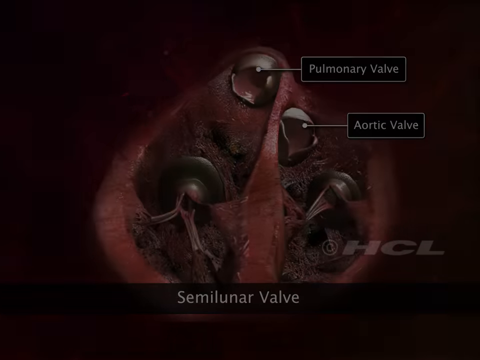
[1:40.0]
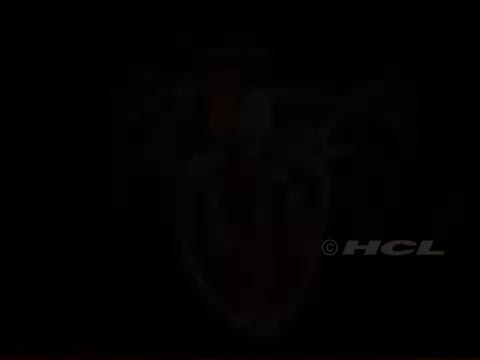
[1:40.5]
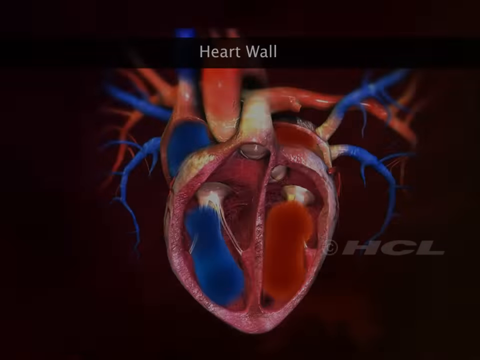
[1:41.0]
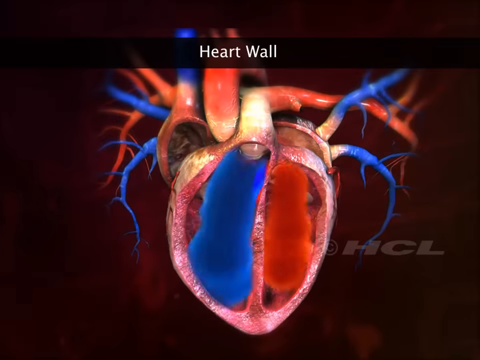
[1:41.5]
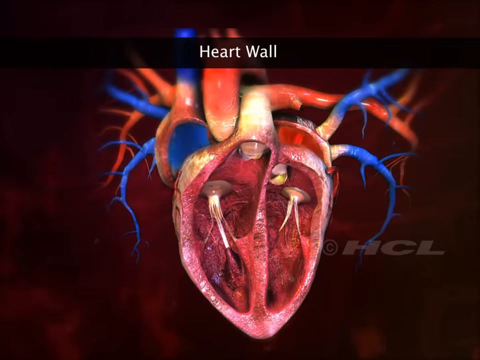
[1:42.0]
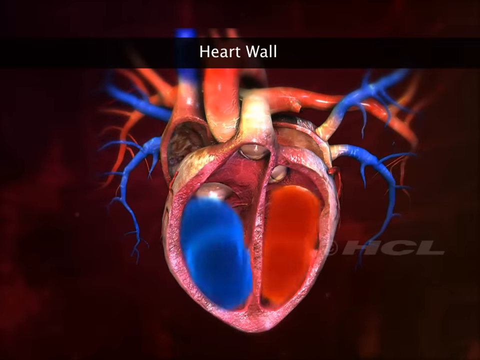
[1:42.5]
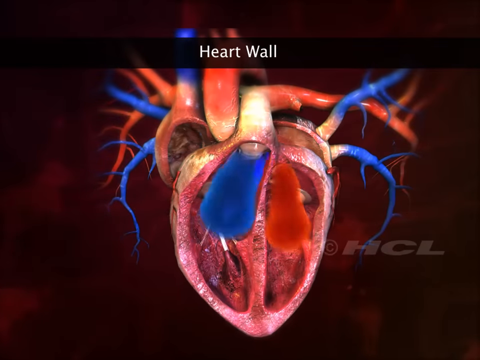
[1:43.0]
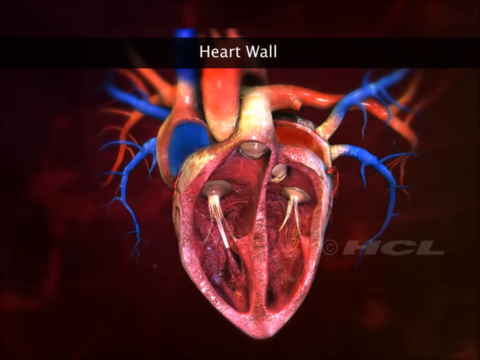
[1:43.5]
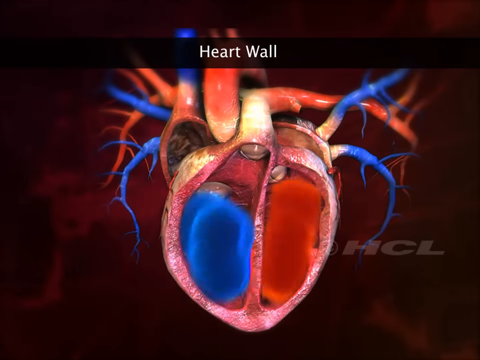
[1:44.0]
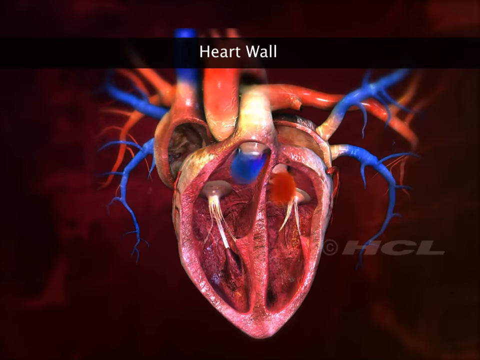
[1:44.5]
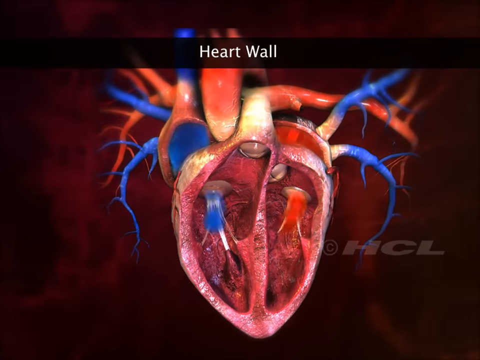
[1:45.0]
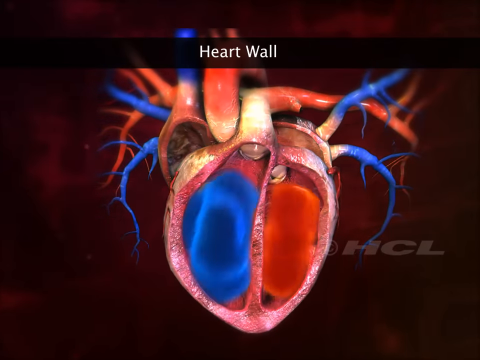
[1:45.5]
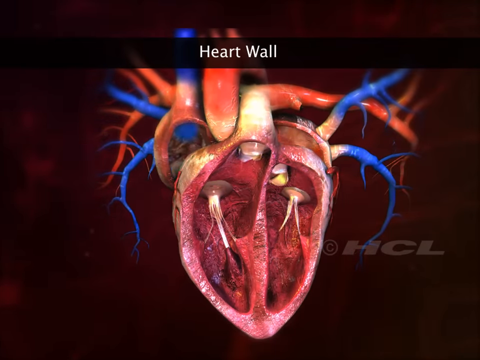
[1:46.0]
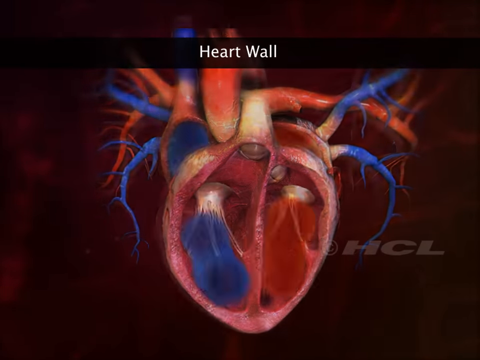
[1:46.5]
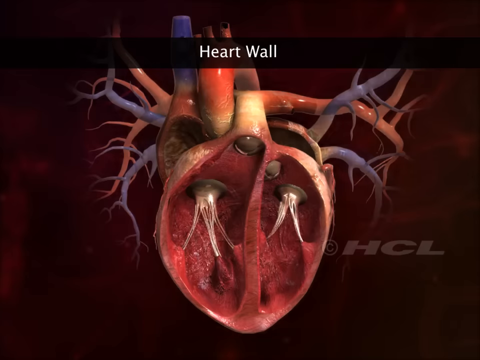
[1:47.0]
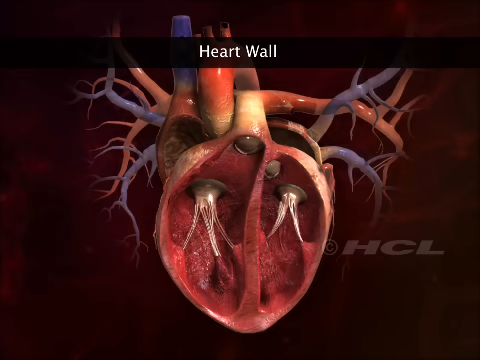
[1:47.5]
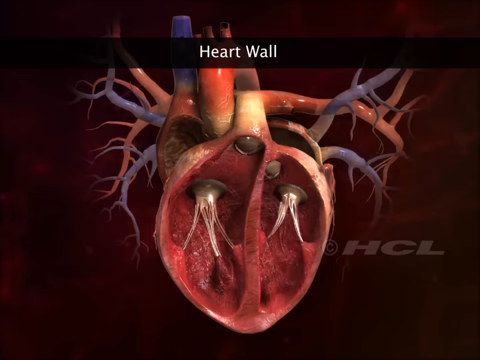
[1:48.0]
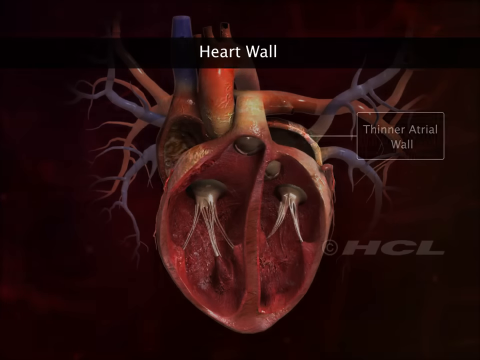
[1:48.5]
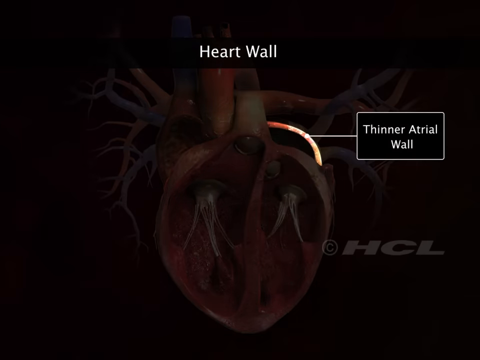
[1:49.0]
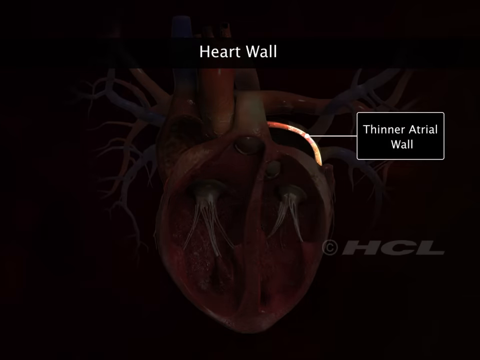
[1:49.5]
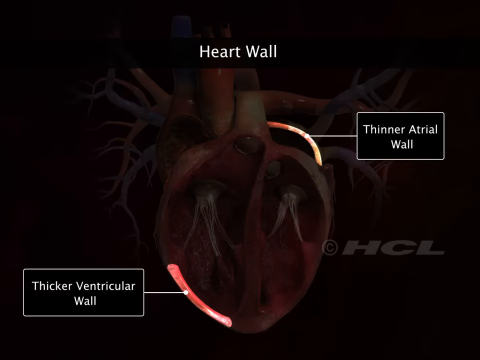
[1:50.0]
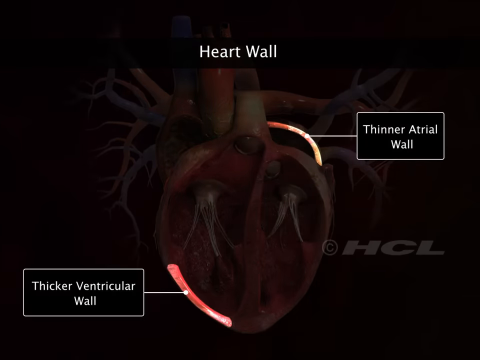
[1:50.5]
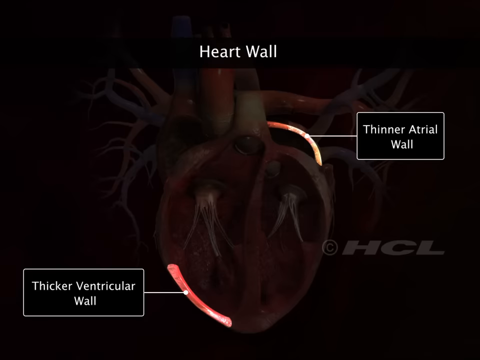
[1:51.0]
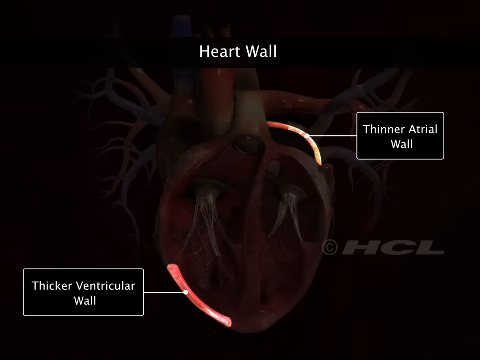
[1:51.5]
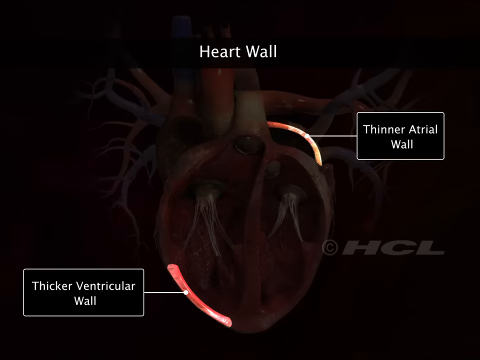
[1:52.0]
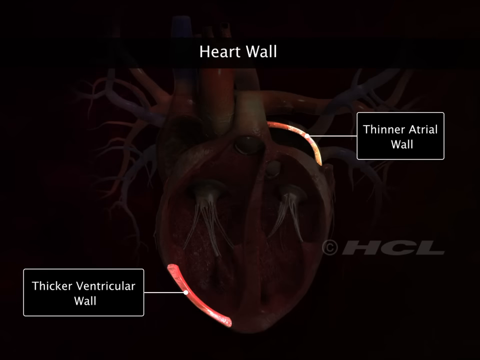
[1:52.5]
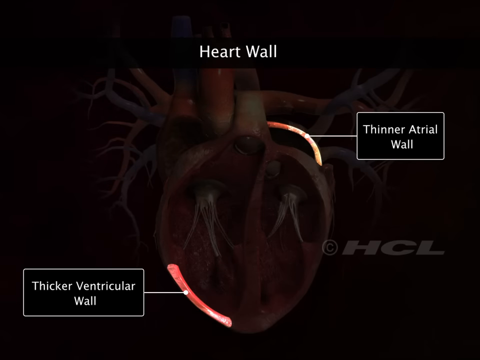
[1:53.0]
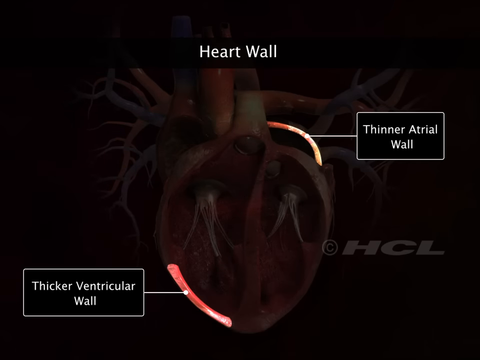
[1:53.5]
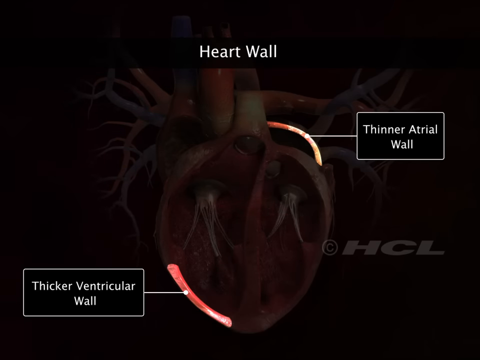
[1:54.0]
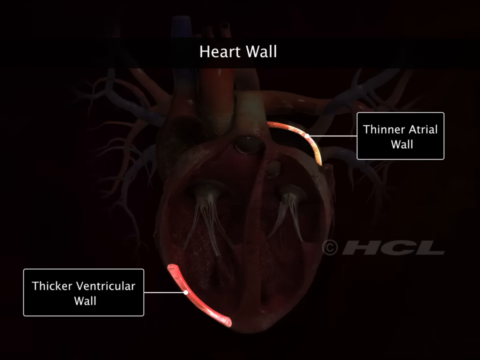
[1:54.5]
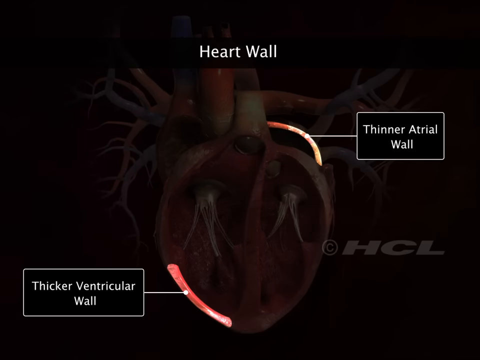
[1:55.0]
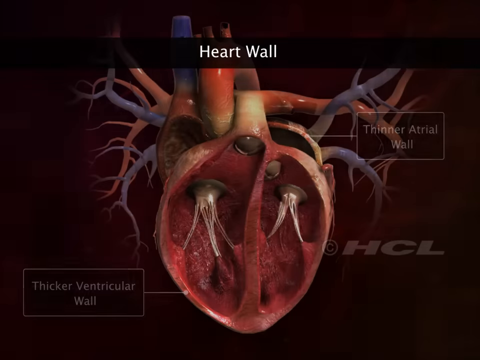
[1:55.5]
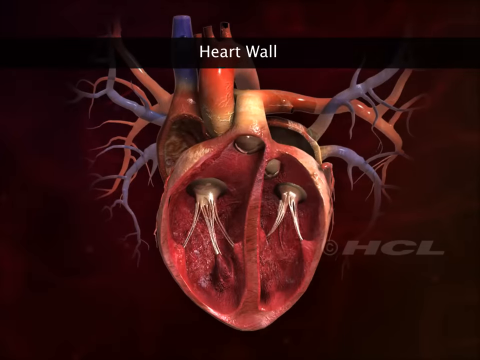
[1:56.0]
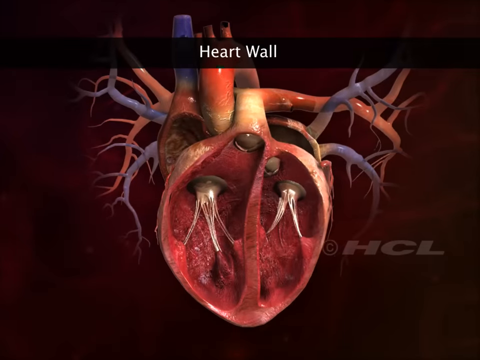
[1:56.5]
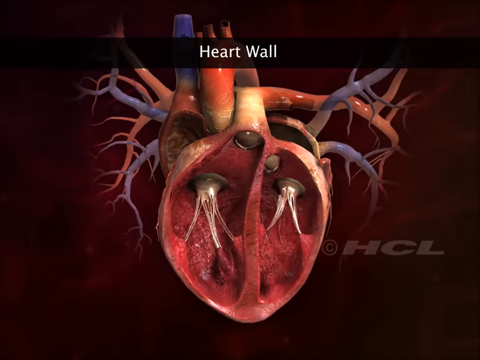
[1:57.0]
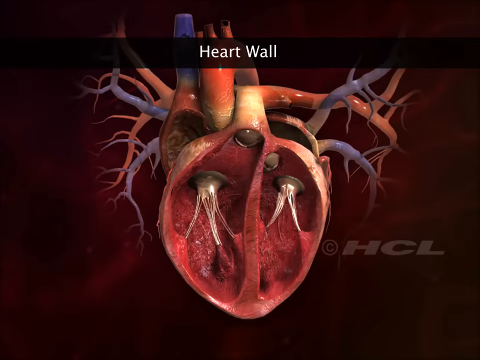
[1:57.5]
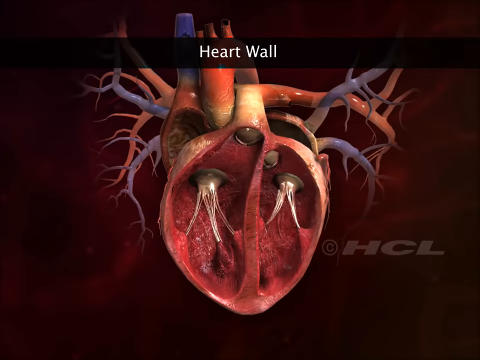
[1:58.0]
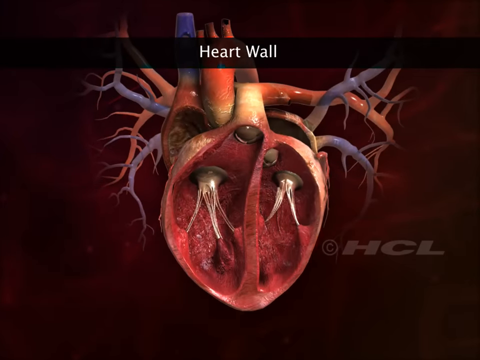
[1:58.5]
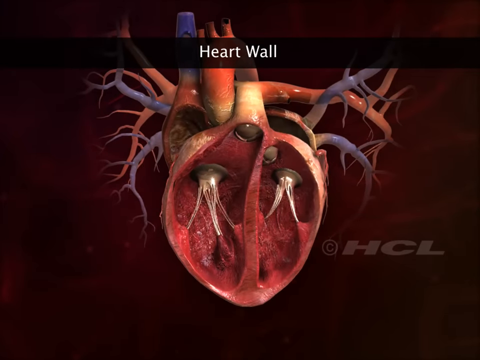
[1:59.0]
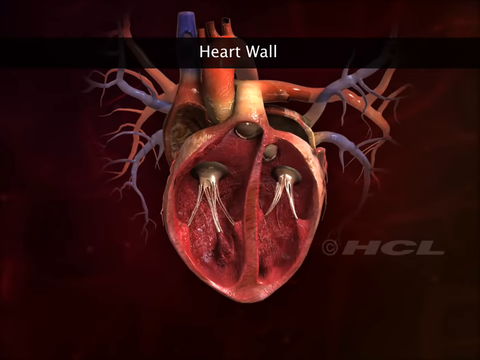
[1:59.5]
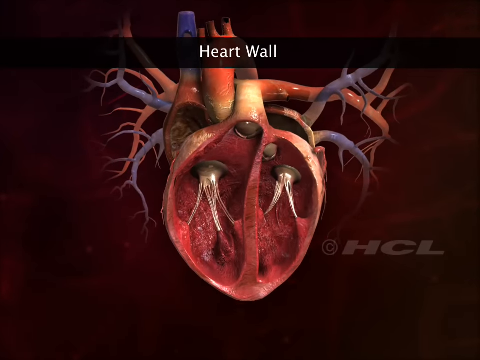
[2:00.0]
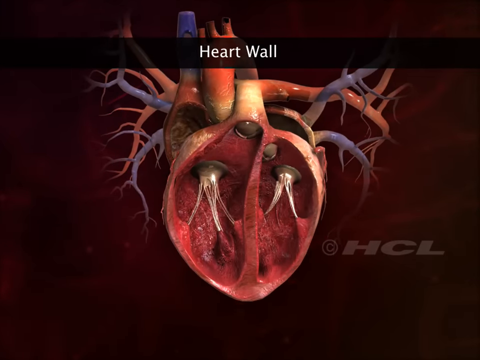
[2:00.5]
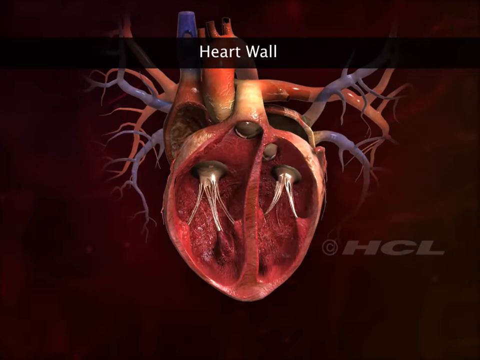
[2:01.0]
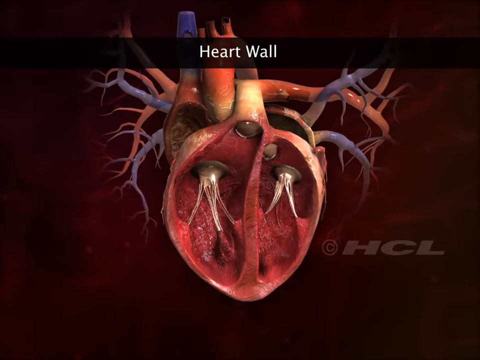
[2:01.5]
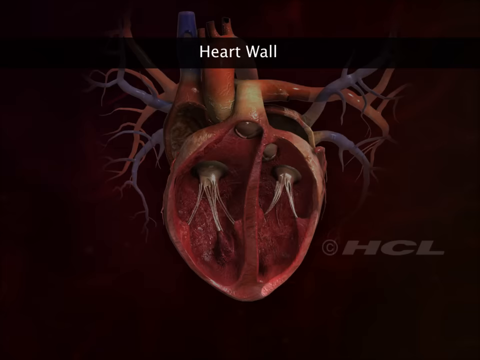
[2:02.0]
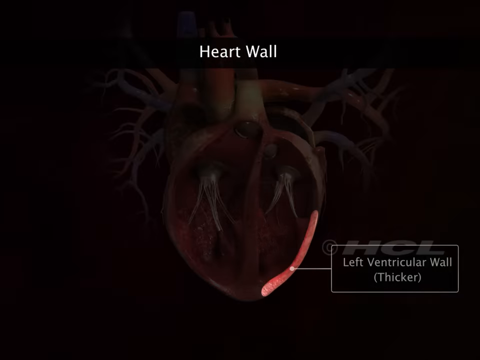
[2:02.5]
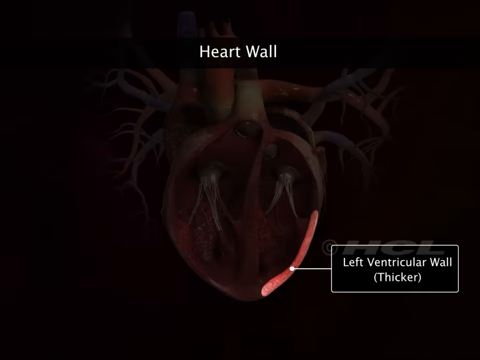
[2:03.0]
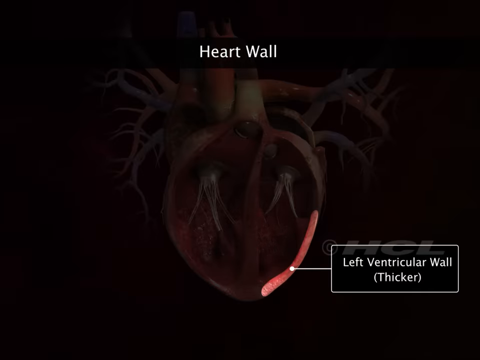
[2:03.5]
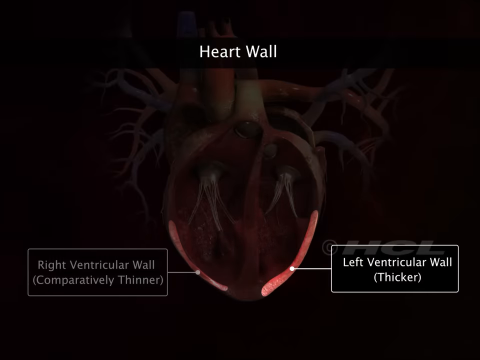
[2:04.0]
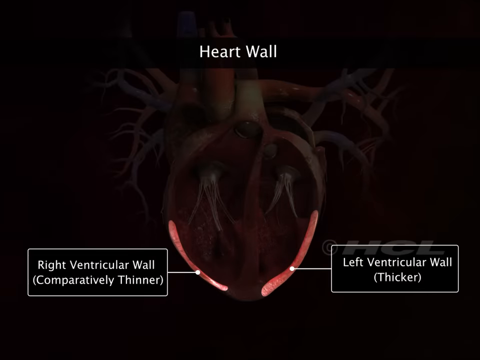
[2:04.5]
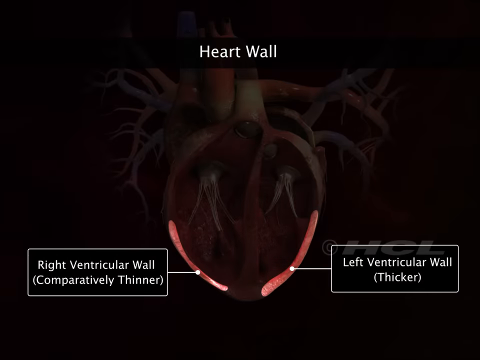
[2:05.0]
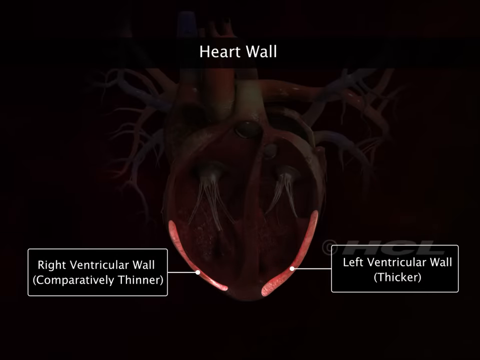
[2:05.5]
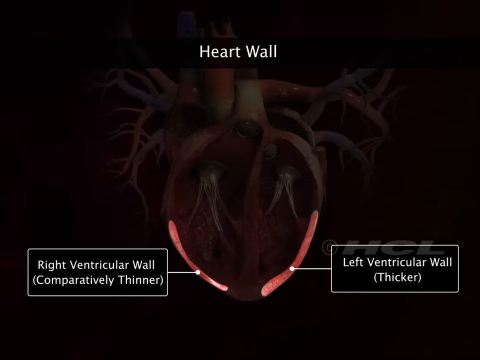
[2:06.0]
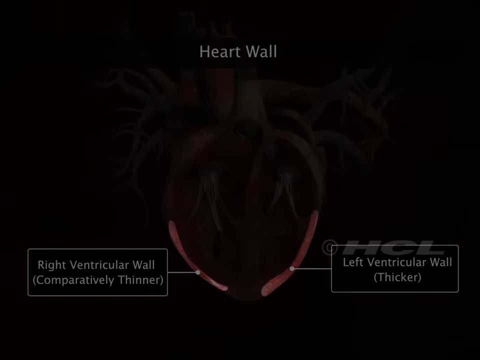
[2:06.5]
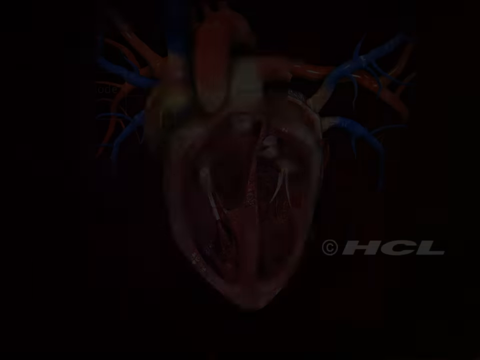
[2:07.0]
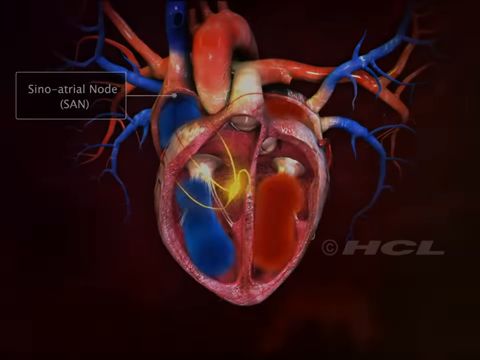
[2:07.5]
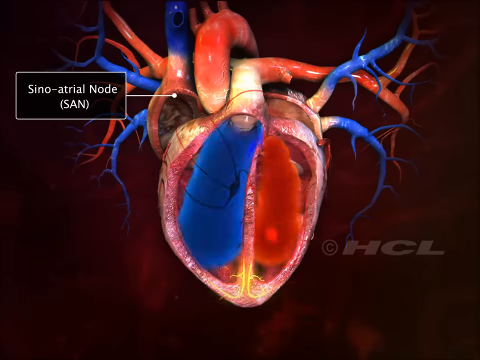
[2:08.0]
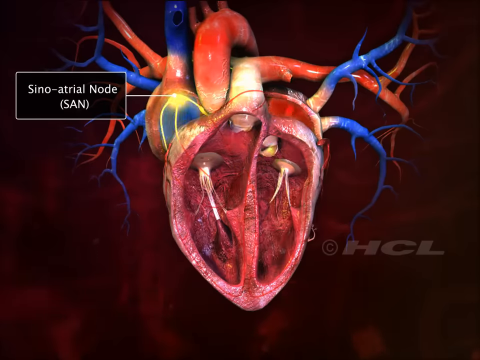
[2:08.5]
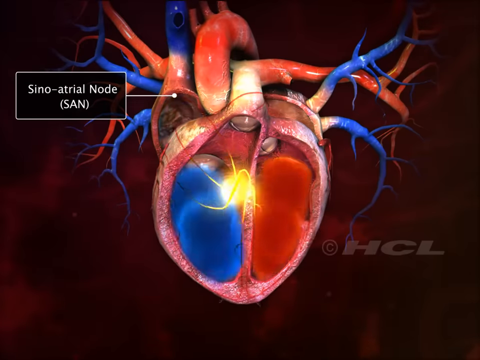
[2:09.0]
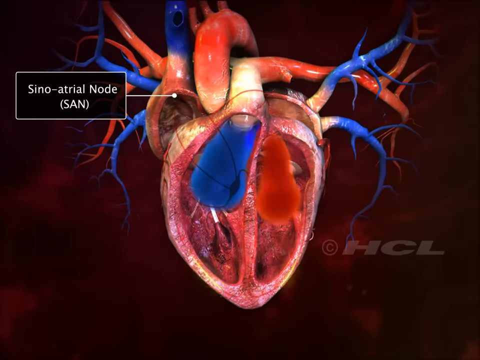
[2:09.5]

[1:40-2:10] On a dark screen, a diagram of a semi-lunar valve is shown inside a heart, with the pulmonary valve and the aortic valve pointed out, and "semi-lunar valve" at the bottom. The scene shifts to the heart wall, with "heart wall" at the top; the heart is kind of cut open, and as it beats, red liquid and blue liquid are sucked into valves, pushed out of different tubes and come back in over and over. The scene shifts and goes dark; a piece of the heart on the right side is highlighted with "thinner atrial wall," and another part in the bottom left corner is highlighted with "thicker ventricular wall." On the right side of the screen is "copyright HCL." The scene shifts again to the inside of the heart with "heart wall" at the top again; this time no blood is pumping and the heart stays still, as if not beating at all. It goes dark again, and a piece in the bottom right corner is highlighted with "left ventricular wall (thicker)," while another piece on the left is highlighted with "right ventricular wall (comparatively thinner)." It shifts back to the heart, where a rectangle reading "senoatrial node" points to a part of the heart in the upper left corner, and something kind of like an electrical signal moves from that part to the center of the heart.